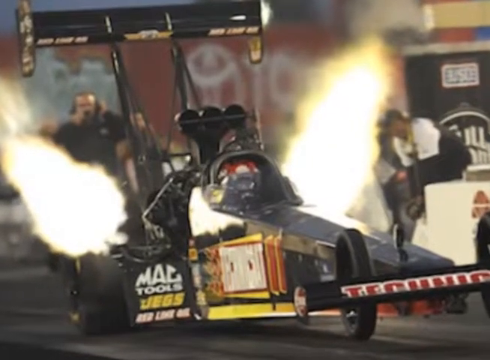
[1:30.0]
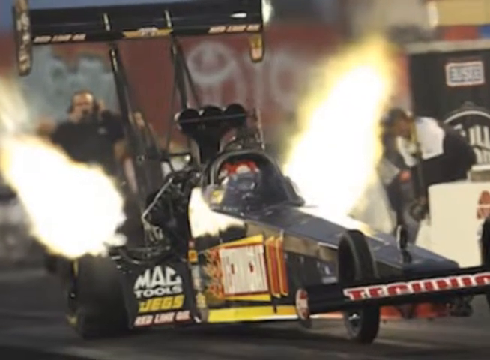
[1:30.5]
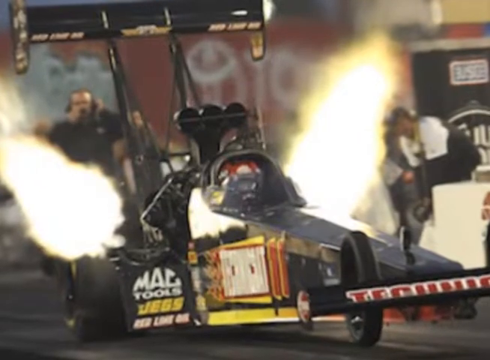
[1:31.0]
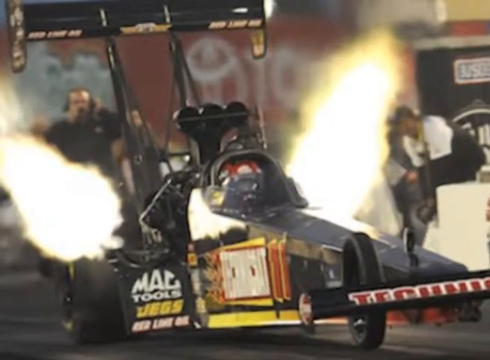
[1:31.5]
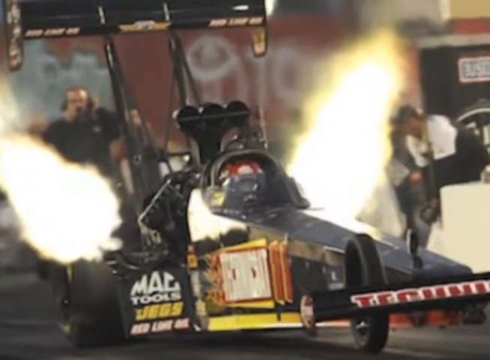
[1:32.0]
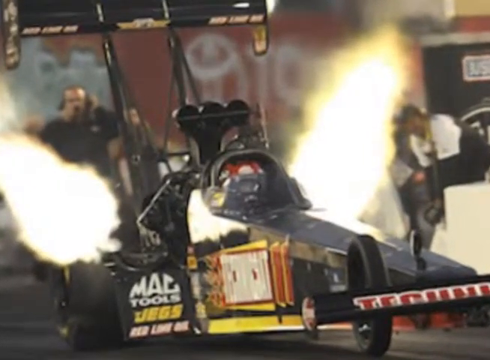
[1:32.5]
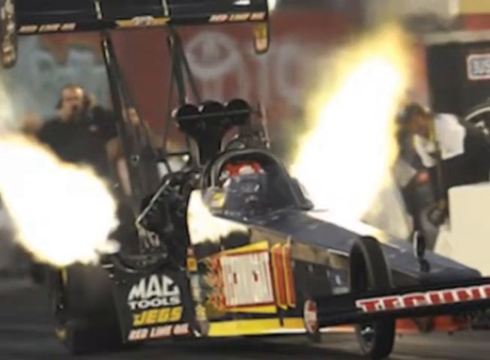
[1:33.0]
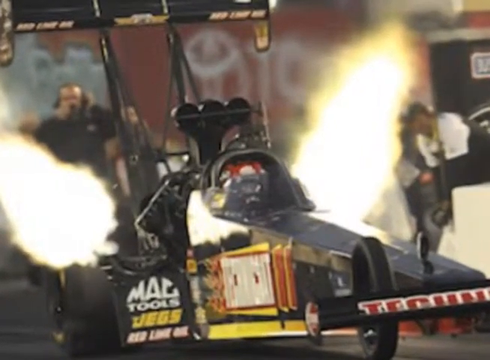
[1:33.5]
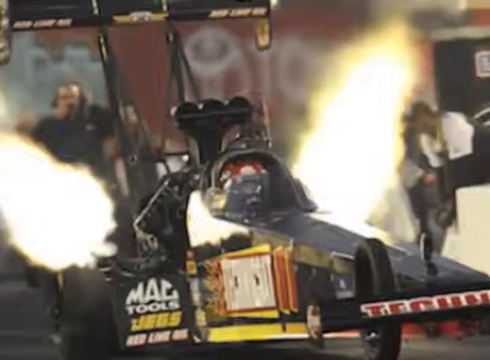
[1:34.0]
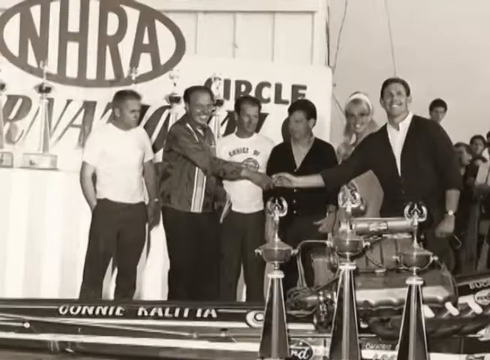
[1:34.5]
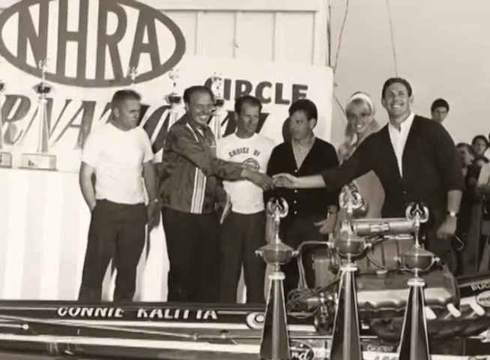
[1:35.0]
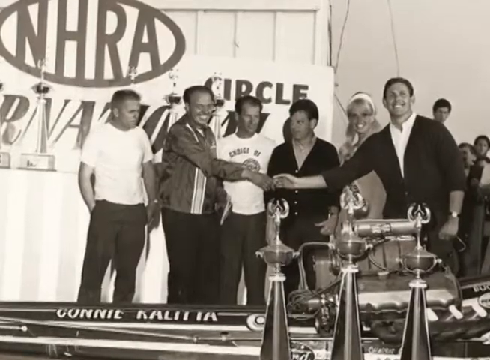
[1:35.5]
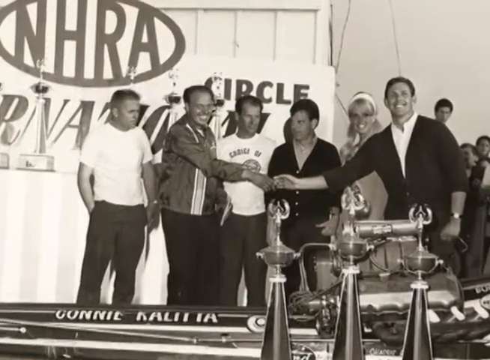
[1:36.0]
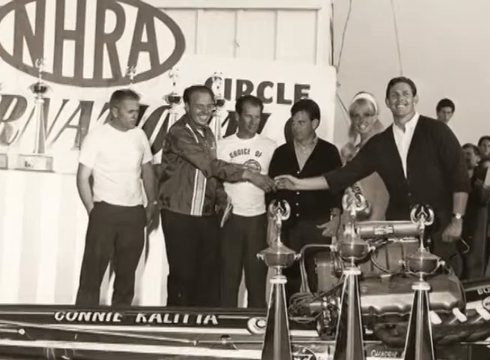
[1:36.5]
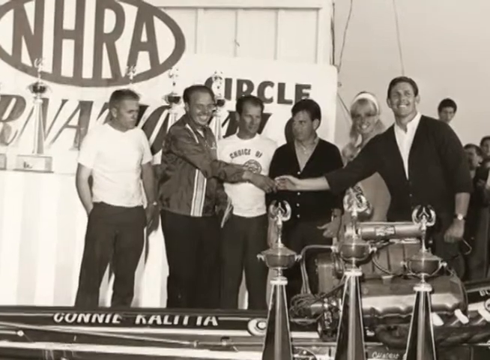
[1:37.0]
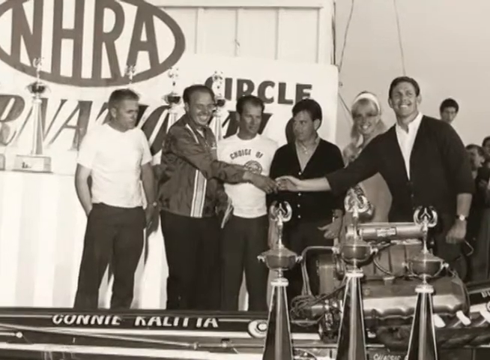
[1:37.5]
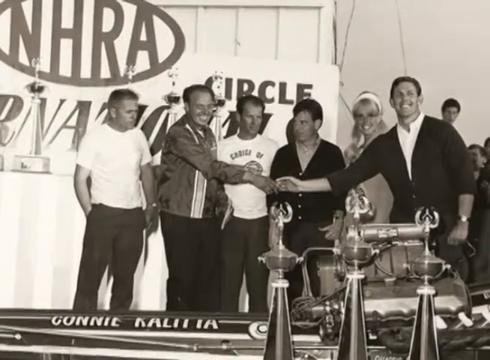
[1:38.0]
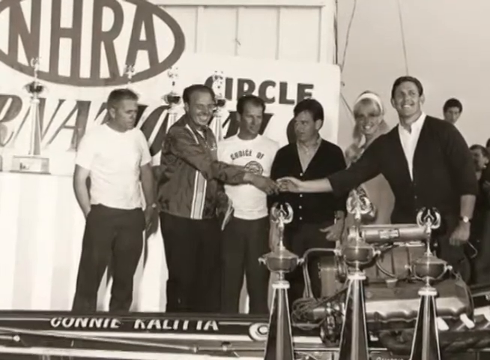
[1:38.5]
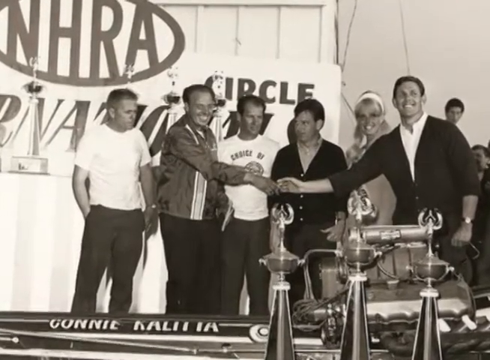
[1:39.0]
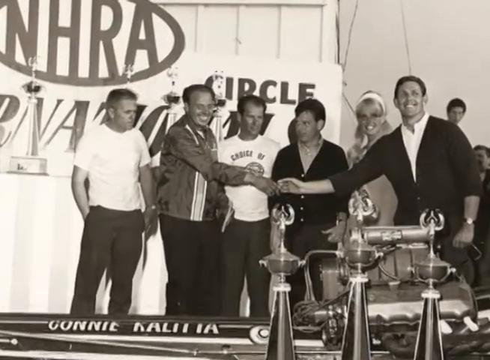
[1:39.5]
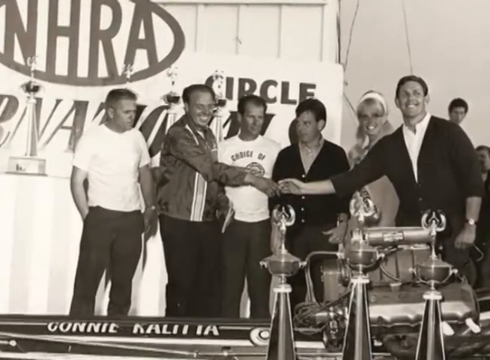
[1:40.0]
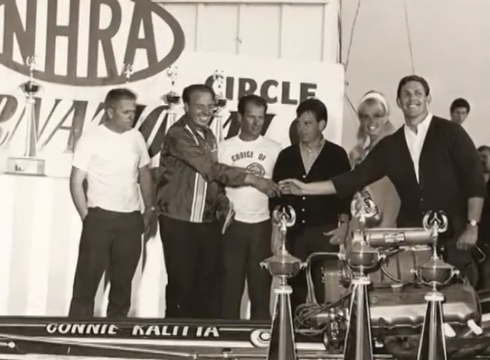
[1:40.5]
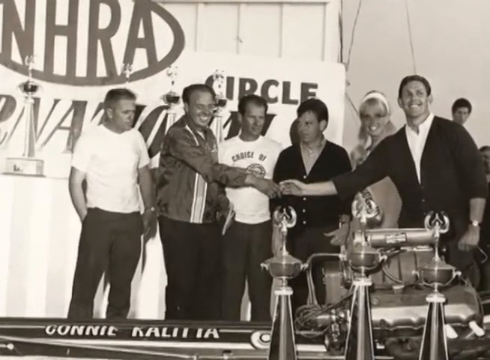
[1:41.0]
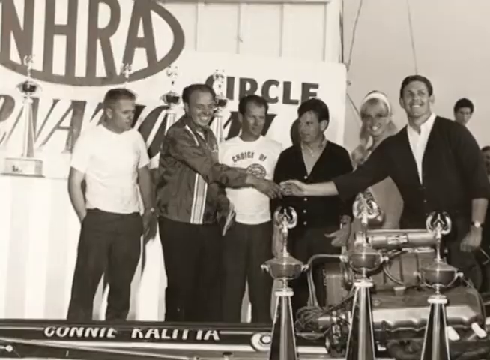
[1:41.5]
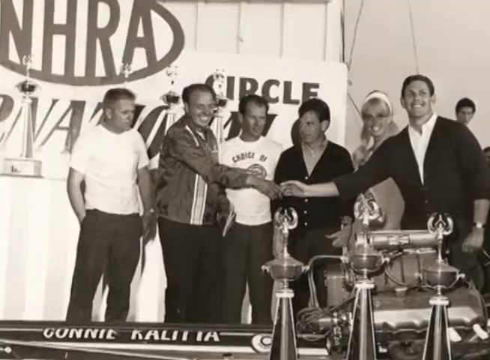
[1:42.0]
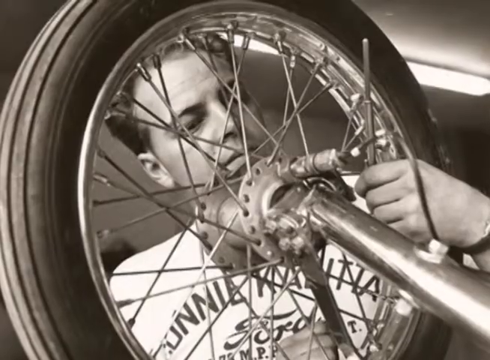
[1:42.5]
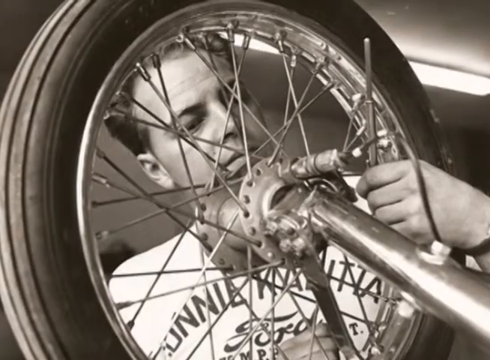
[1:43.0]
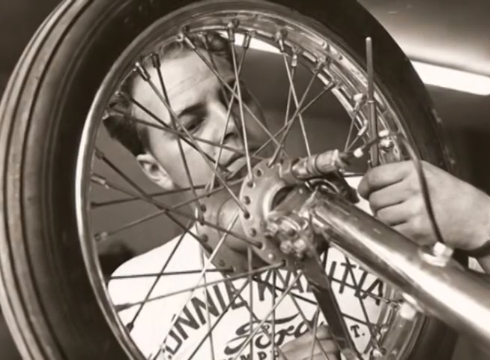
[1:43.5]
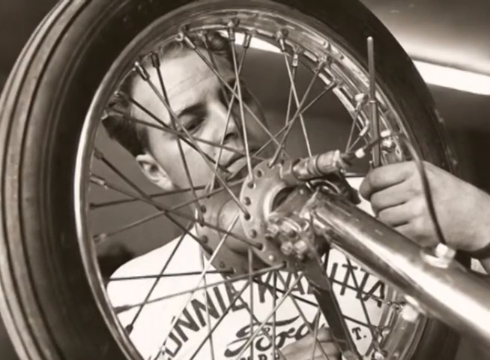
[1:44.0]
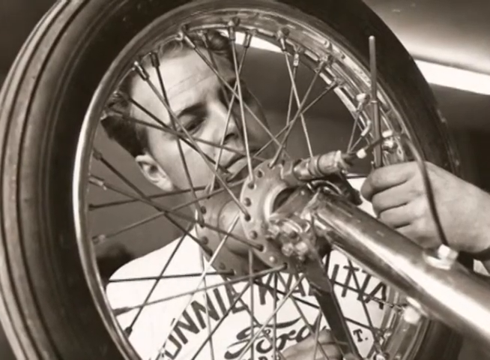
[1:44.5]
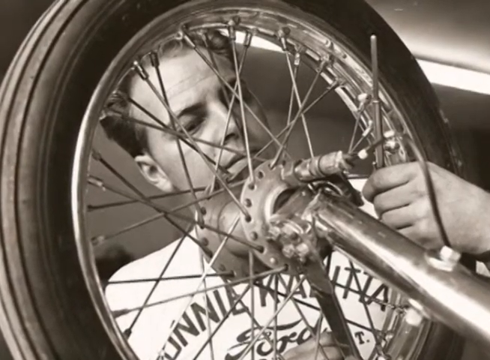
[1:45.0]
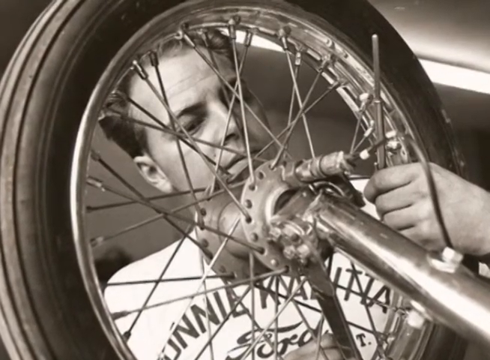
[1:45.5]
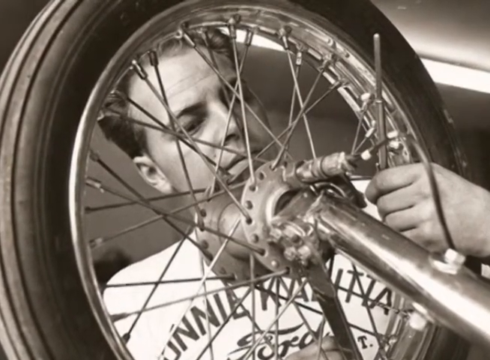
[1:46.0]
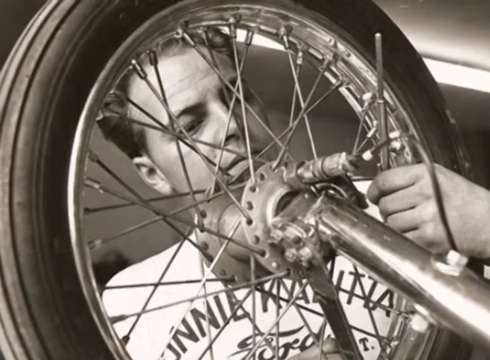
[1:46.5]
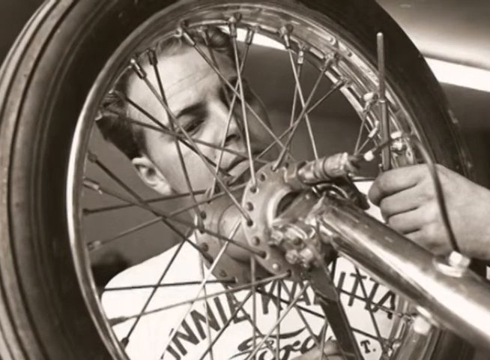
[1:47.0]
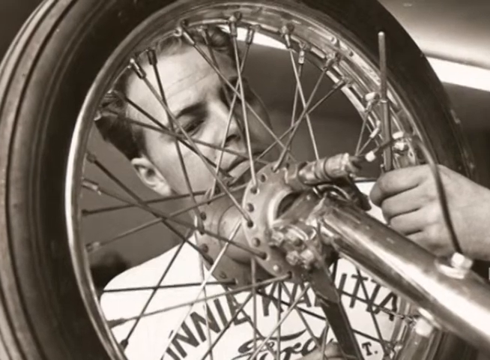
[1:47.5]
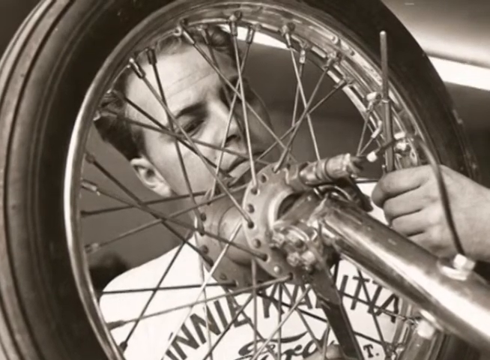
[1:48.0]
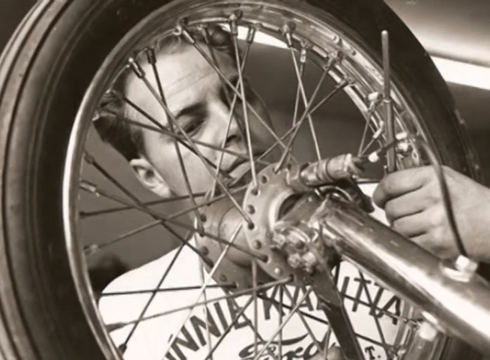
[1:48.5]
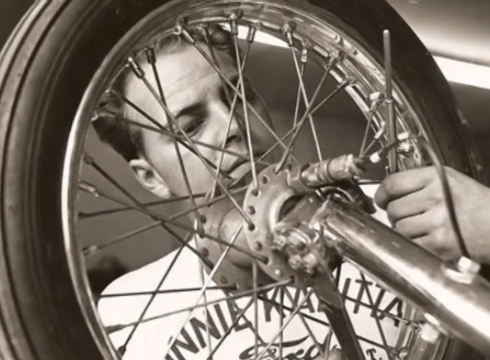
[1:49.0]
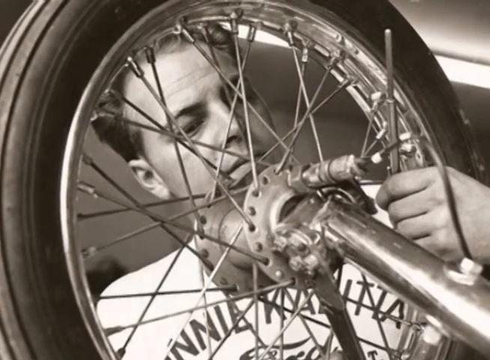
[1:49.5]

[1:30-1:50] On a drag strip, a dragster has just sped away, with smoke coming out of its tailpipes. It has a spoiler on the back and is popping a wheelie, and crew members are visible in the back. The video transitions to black and white footage of a photograph in which people stand sort of stacking their hands on top of one another. They are all men except for one woman, and there are at least three tall trophies in front of them. It looks as though it is from the 1950s or 60s. The video then transitions to a close-up shot of a man working, like a mechanic, on the front suspension or the tire of what looks like a dragster.